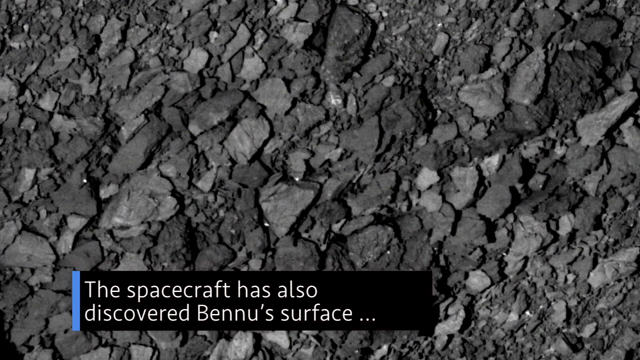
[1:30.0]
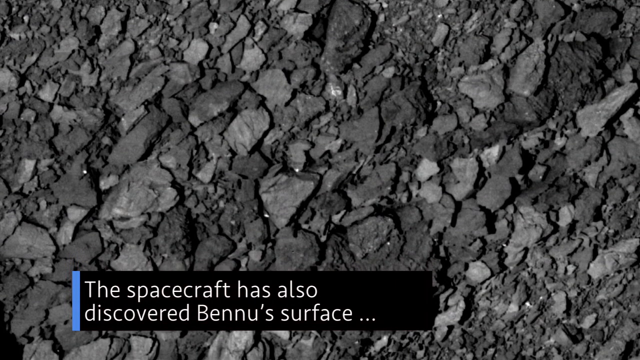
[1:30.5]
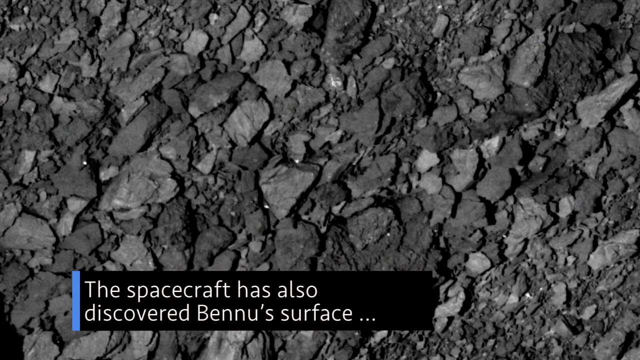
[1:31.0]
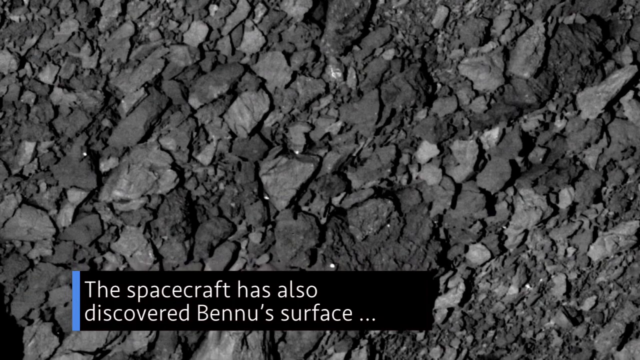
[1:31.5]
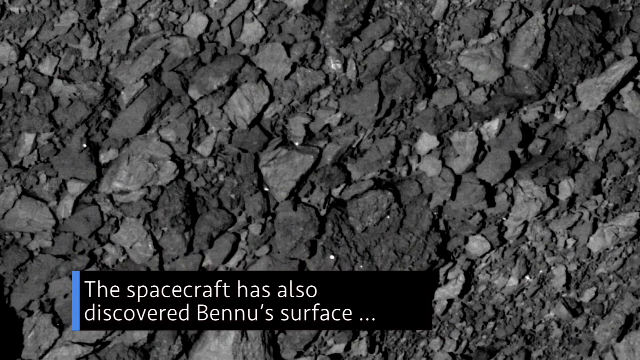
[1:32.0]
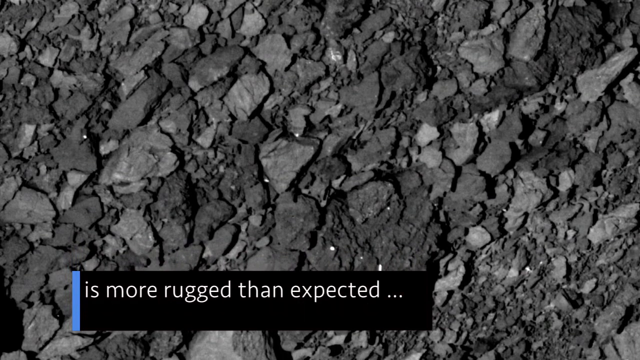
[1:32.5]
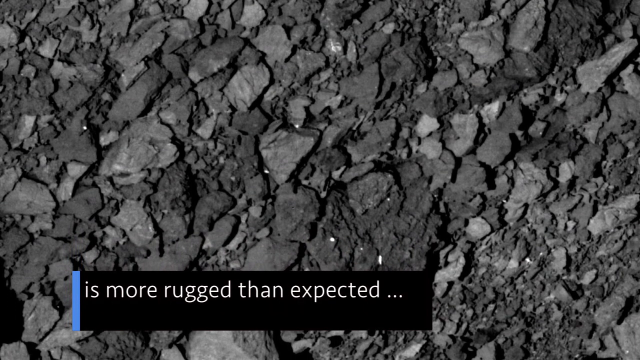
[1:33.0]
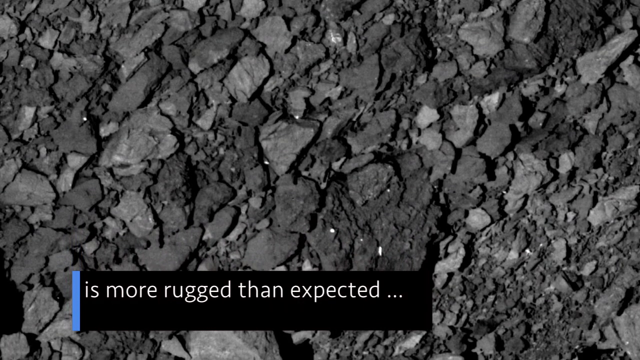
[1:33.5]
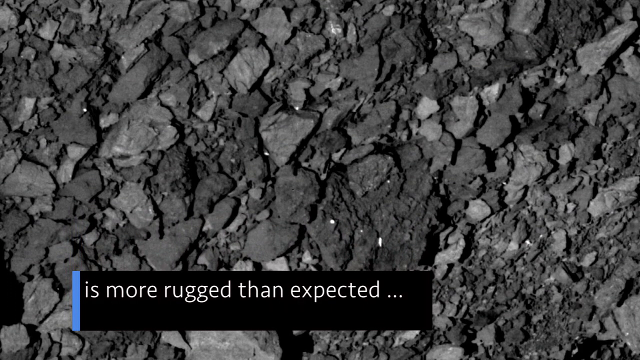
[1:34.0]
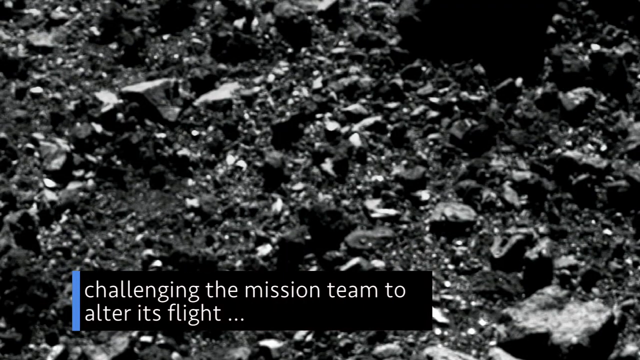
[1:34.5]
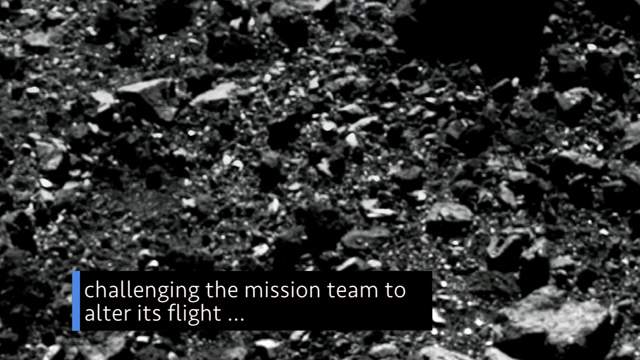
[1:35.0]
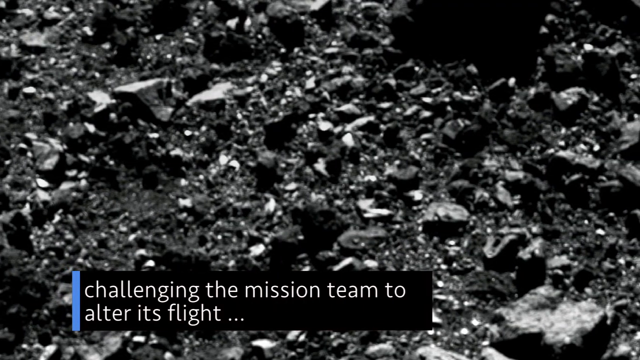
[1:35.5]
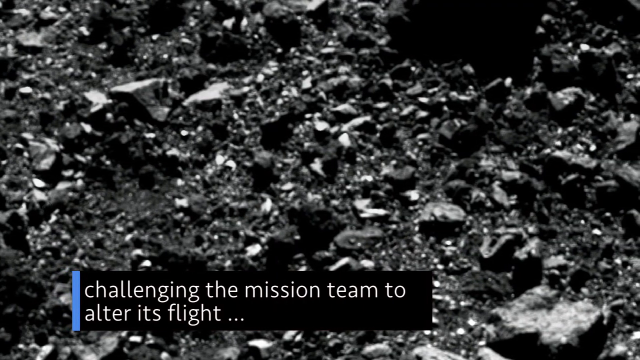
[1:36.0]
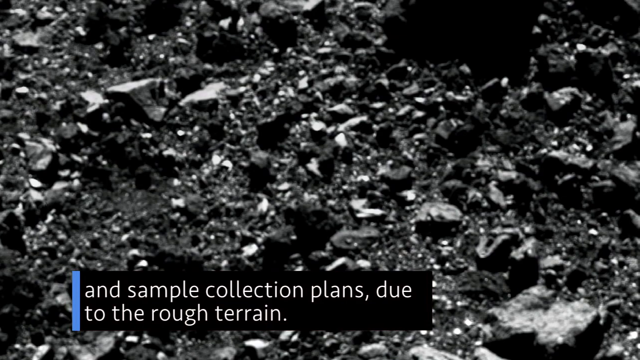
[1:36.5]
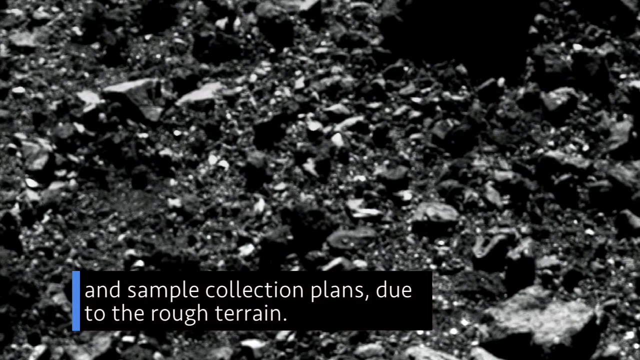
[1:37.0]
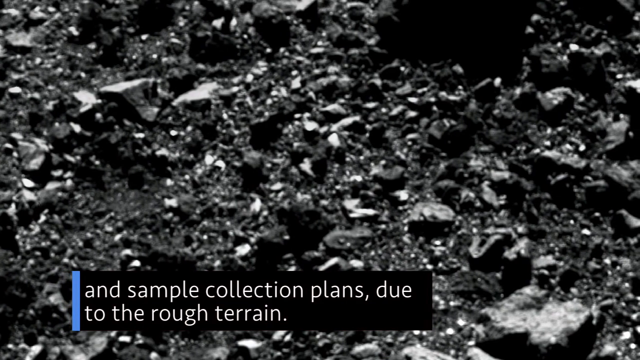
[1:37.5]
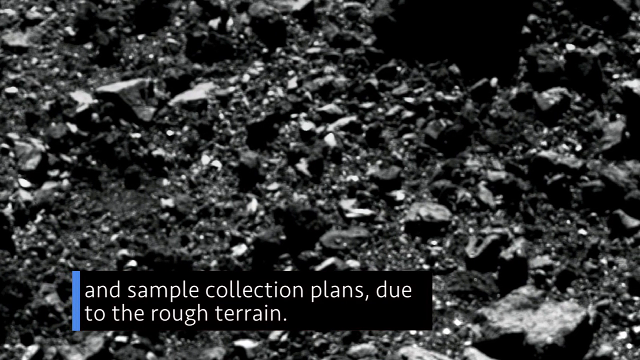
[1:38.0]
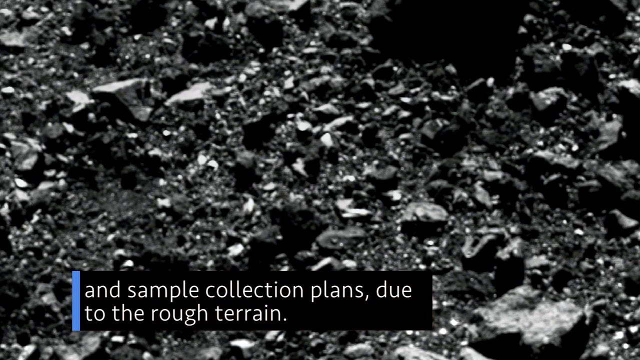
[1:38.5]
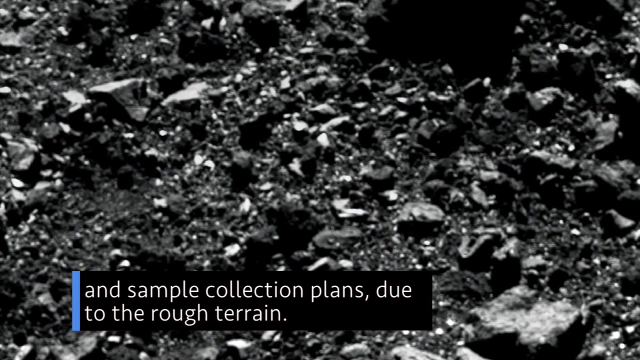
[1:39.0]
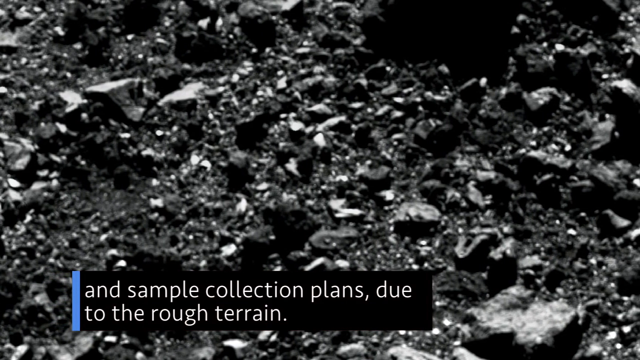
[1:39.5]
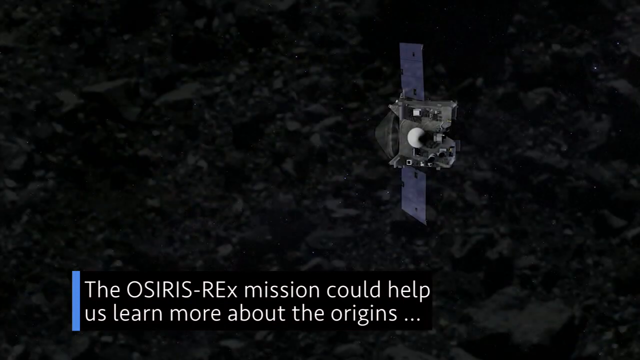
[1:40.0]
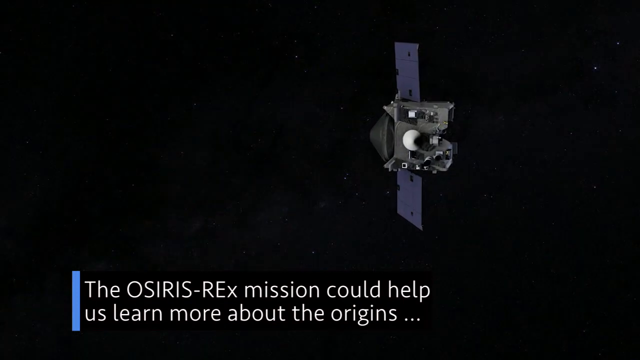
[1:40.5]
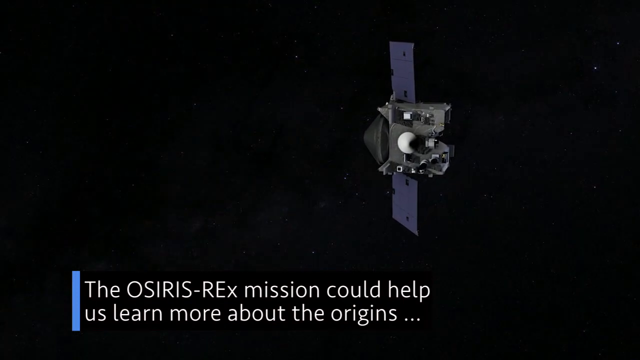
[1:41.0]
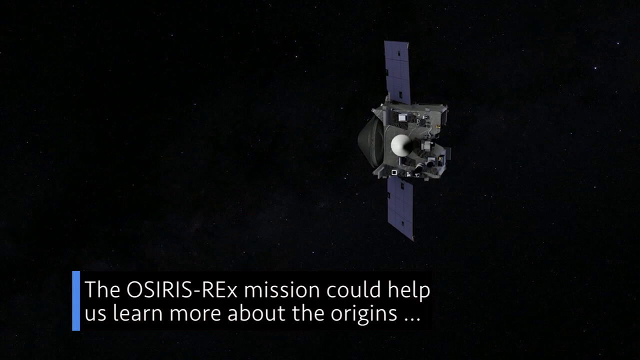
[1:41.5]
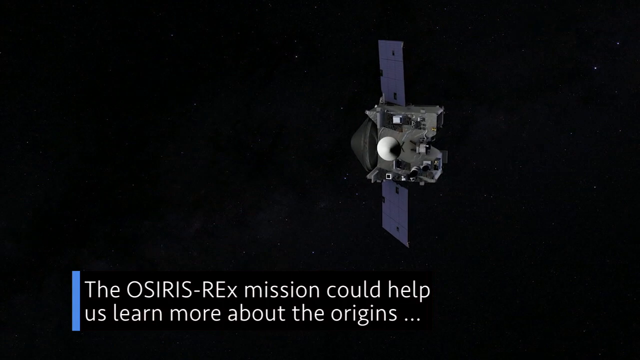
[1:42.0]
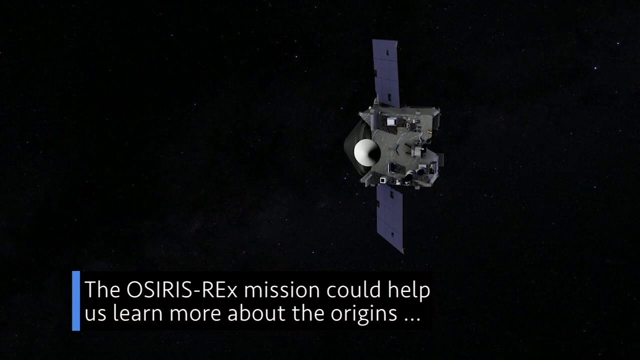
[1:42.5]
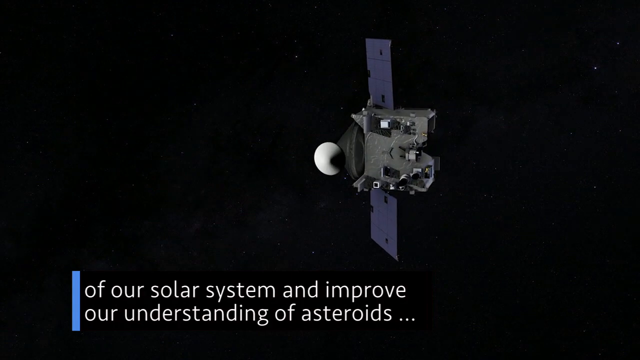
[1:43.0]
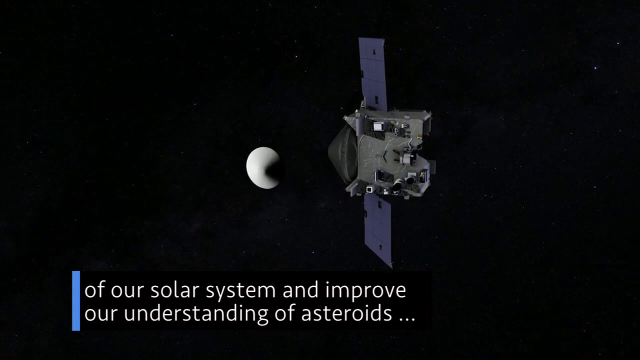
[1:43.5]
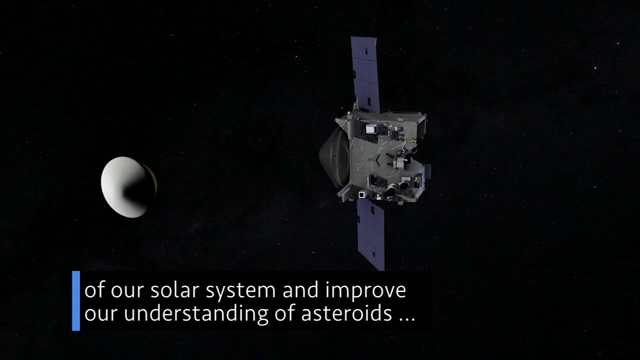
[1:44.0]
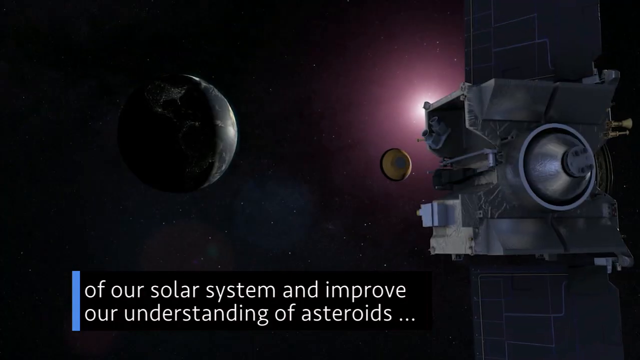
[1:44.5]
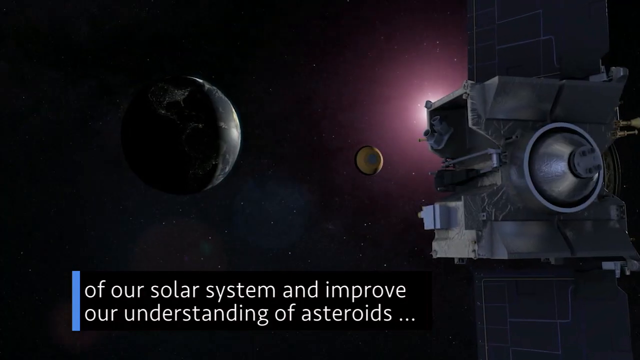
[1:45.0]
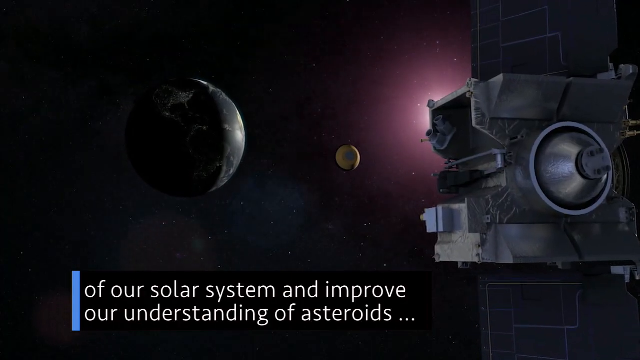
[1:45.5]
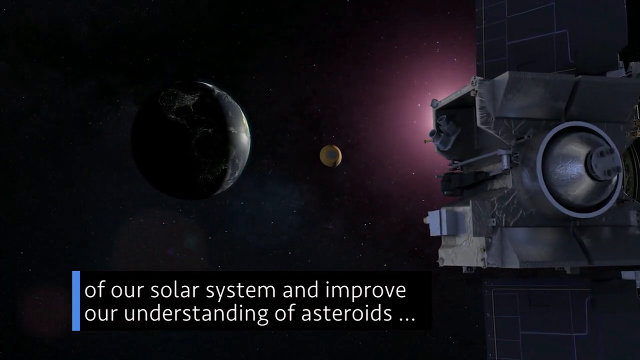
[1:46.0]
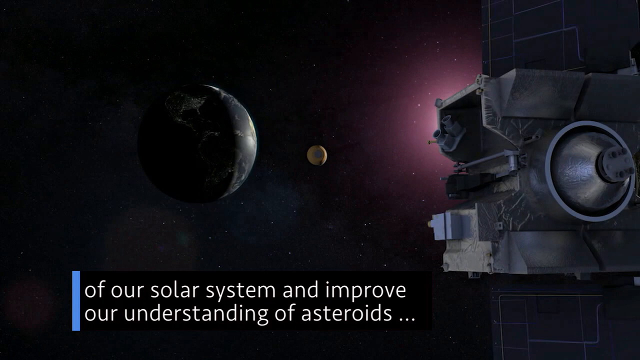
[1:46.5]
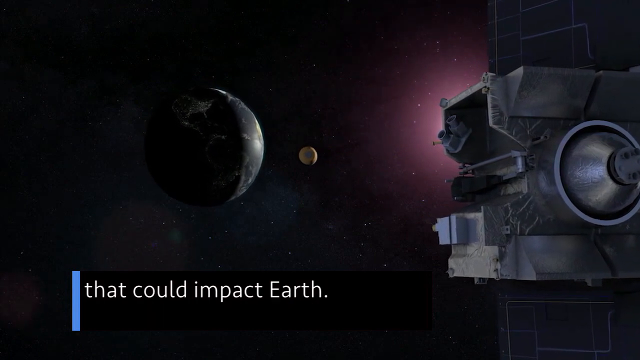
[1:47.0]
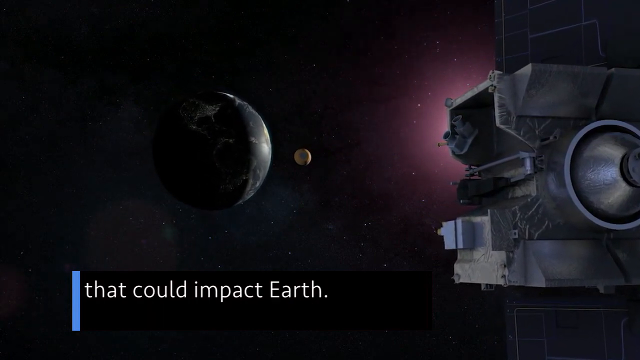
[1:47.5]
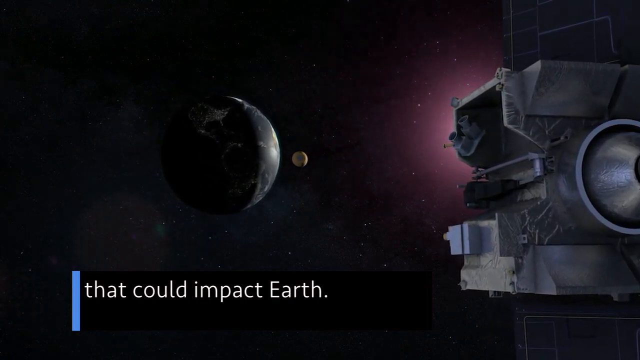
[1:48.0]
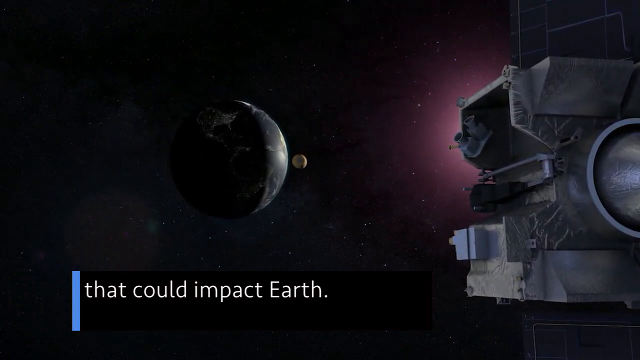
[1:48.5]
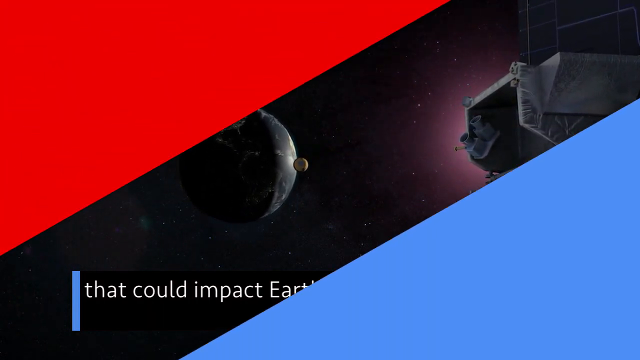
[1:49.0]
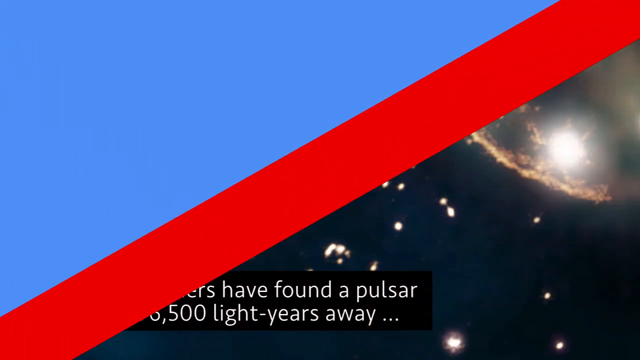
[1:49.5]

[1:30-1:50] A rock floats through space. Text says the spacecraft has also discovered that the surface of asteroids is more rugged than expected, making it challenging for the mission team to alter its flight and sample collection plans because of the rough terrain. It also says the mission could help us learn about the origins of our solar system and improve our understanding of asteroids that could impact Earth.